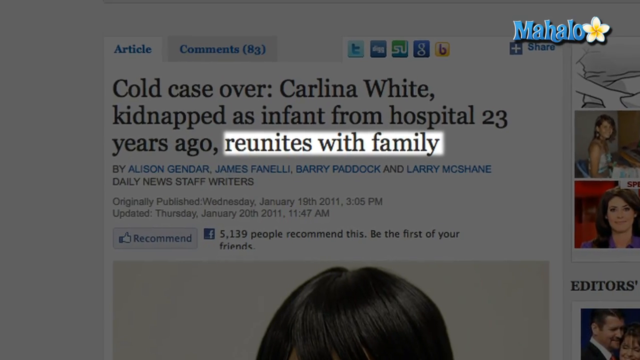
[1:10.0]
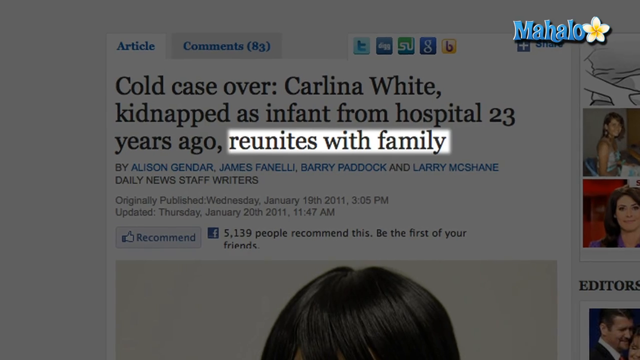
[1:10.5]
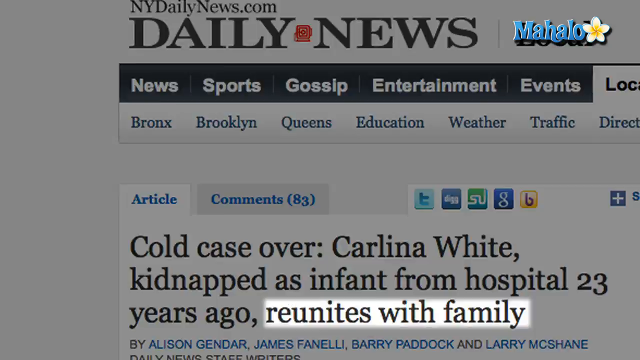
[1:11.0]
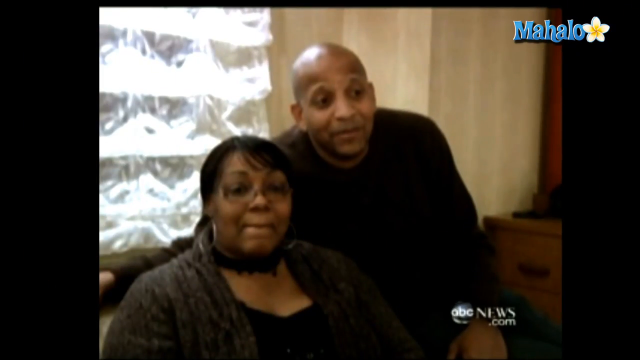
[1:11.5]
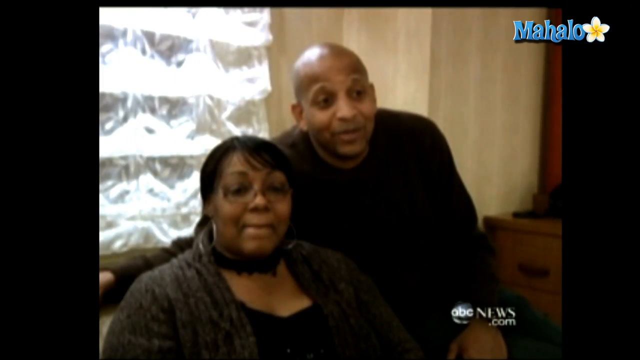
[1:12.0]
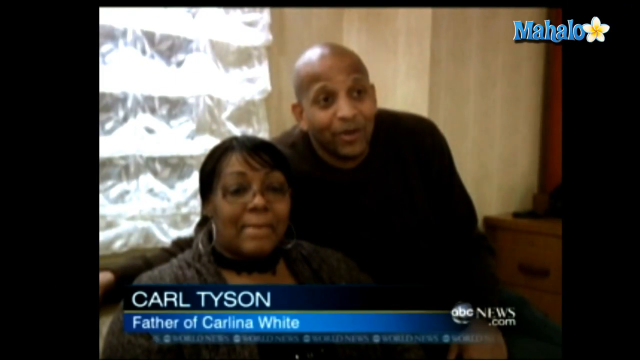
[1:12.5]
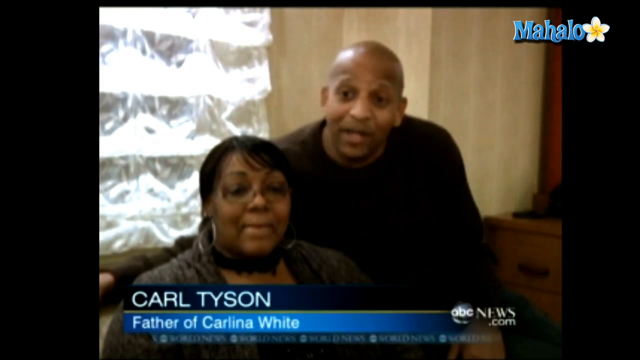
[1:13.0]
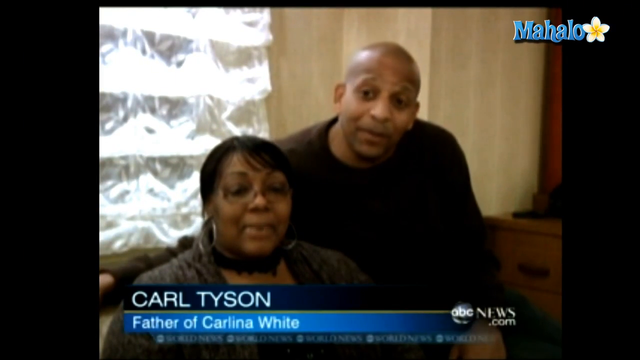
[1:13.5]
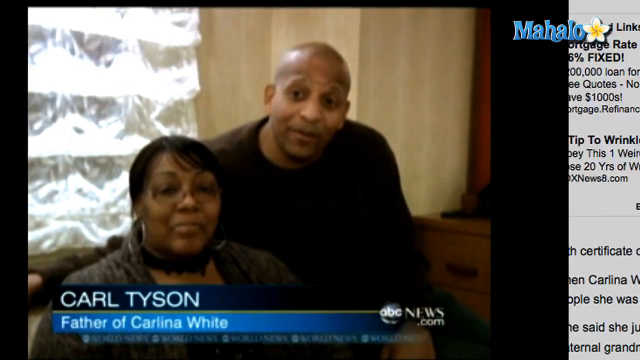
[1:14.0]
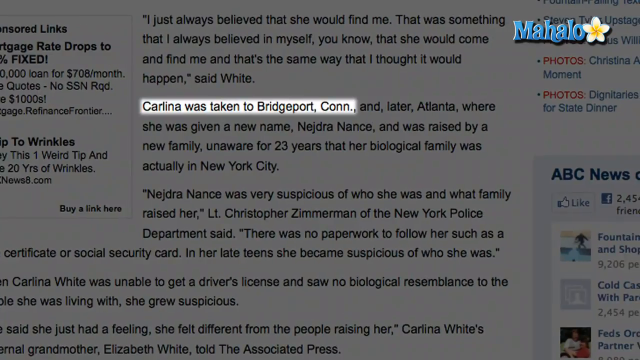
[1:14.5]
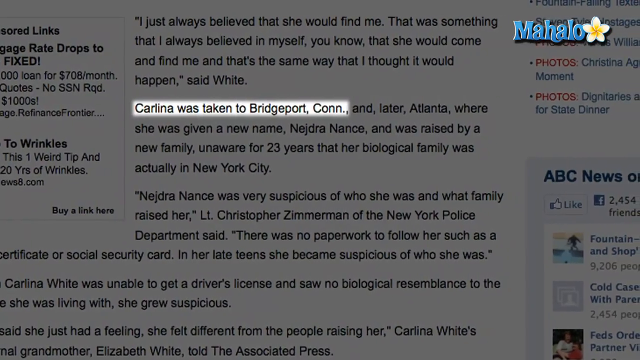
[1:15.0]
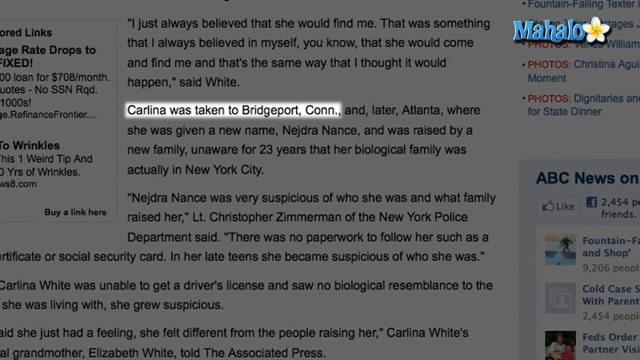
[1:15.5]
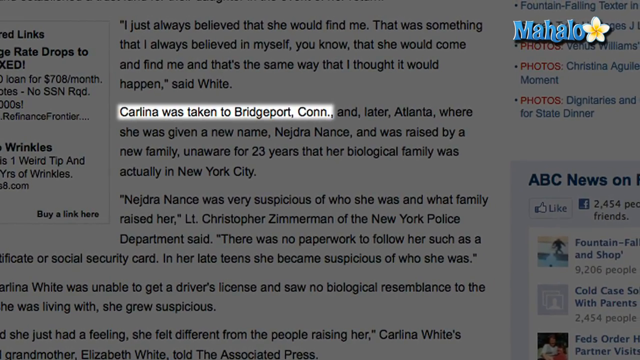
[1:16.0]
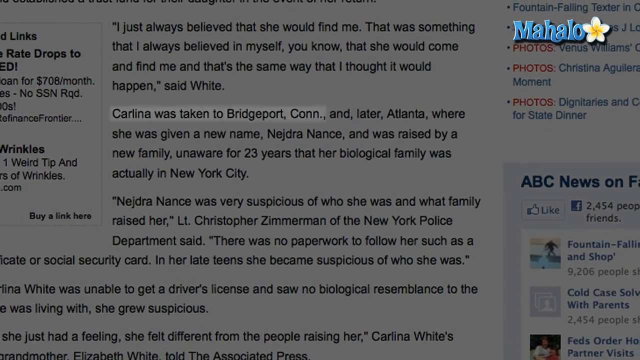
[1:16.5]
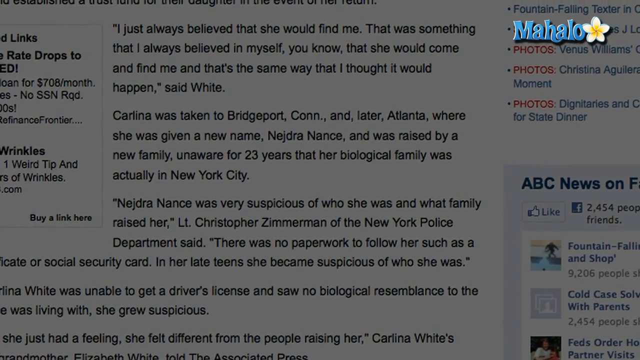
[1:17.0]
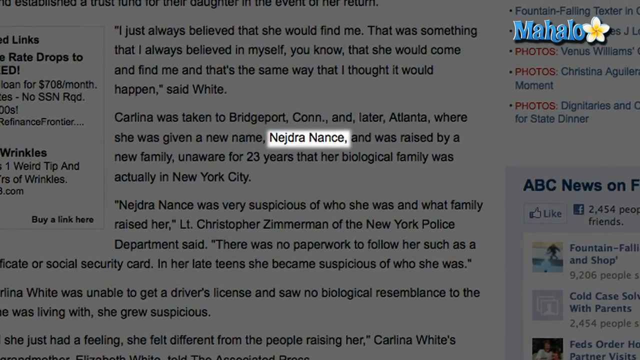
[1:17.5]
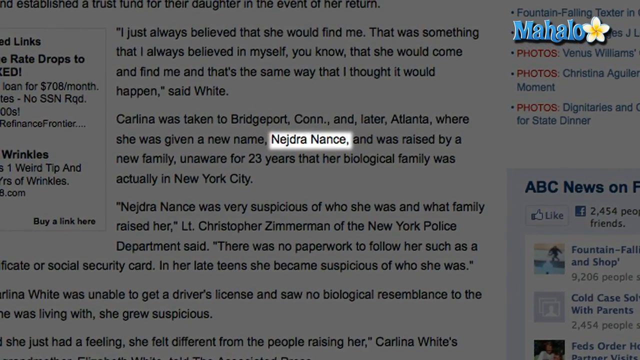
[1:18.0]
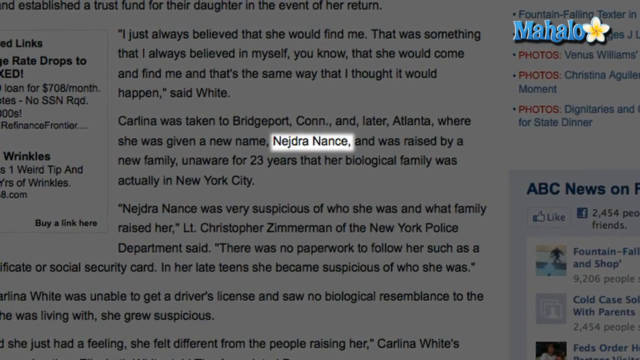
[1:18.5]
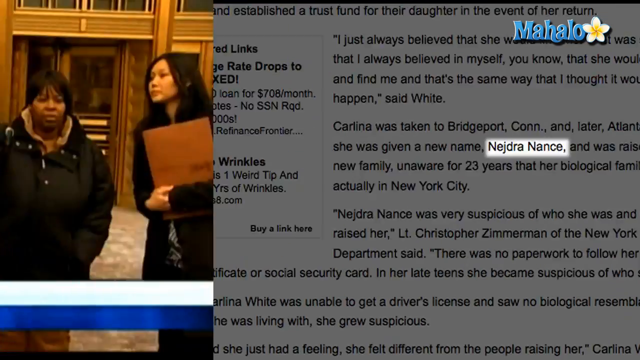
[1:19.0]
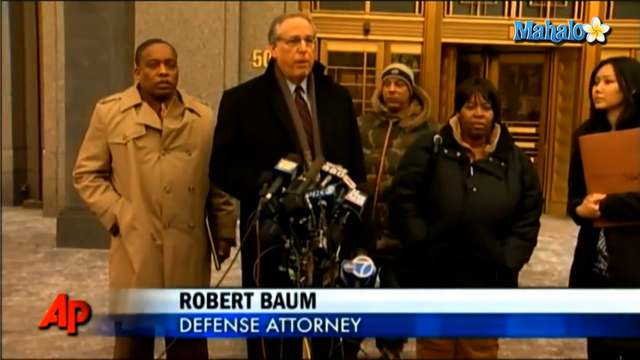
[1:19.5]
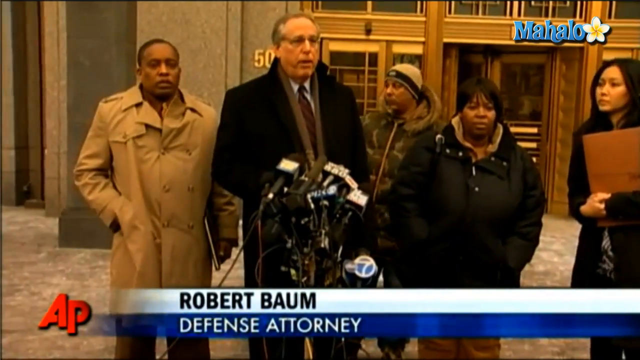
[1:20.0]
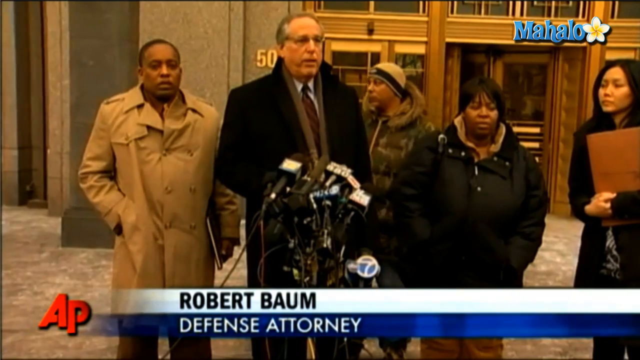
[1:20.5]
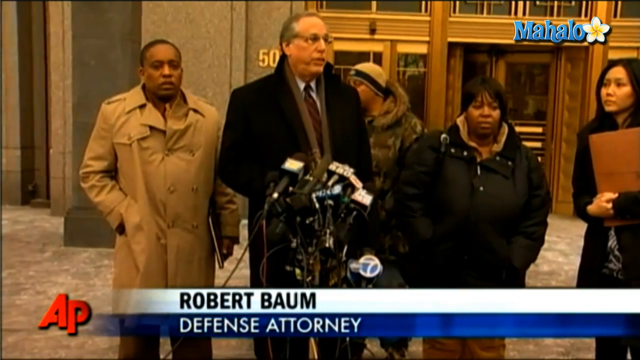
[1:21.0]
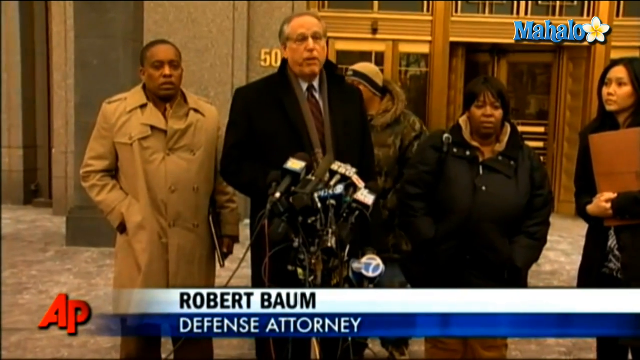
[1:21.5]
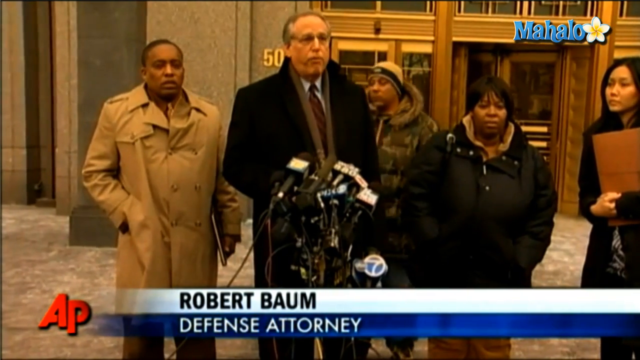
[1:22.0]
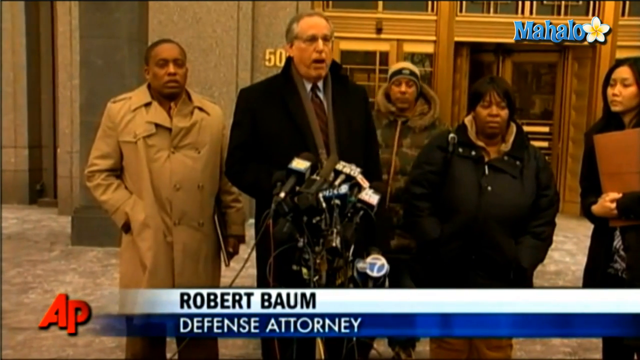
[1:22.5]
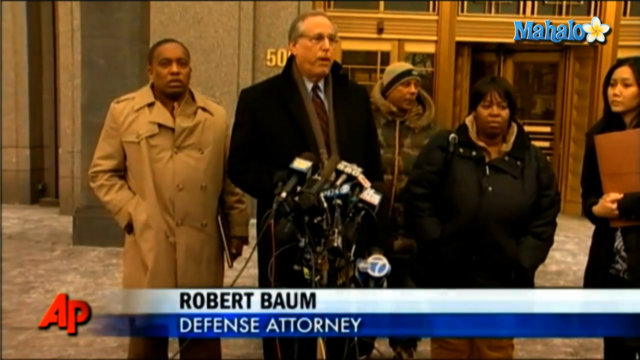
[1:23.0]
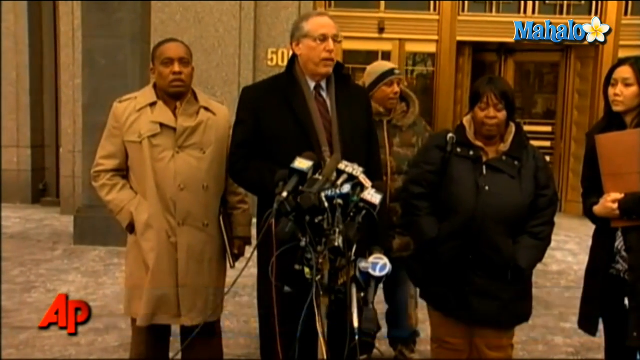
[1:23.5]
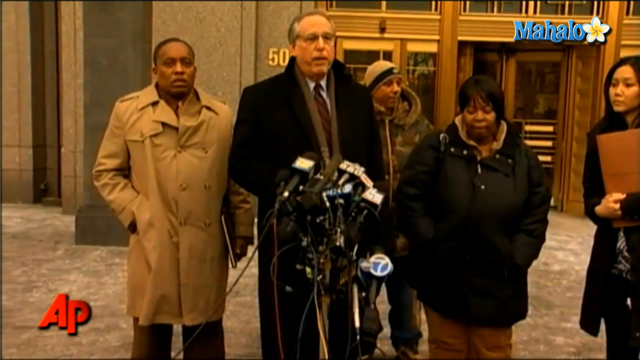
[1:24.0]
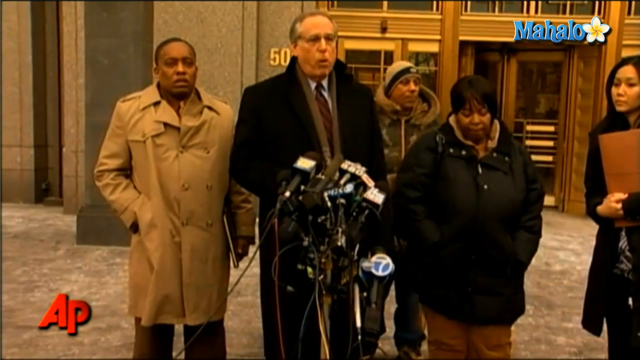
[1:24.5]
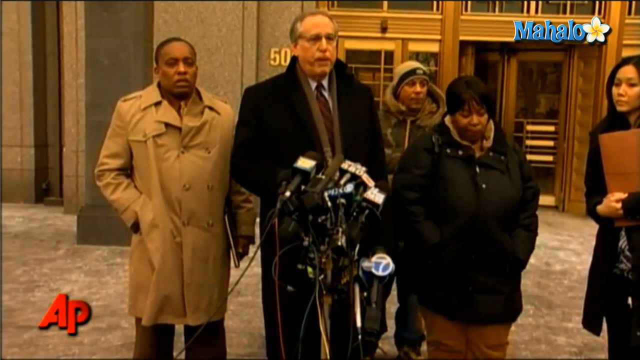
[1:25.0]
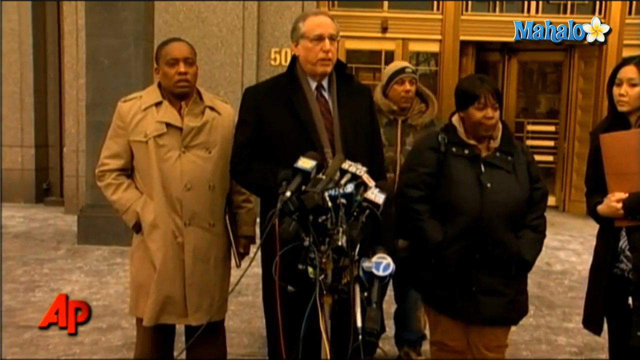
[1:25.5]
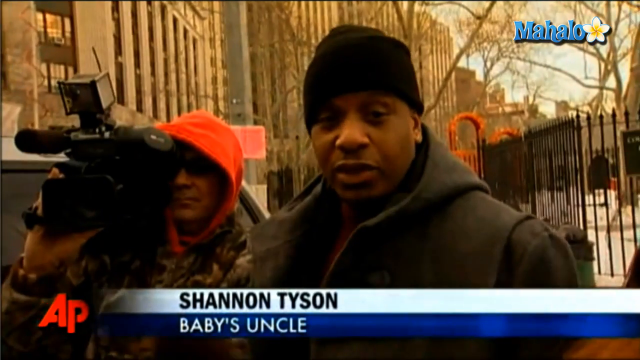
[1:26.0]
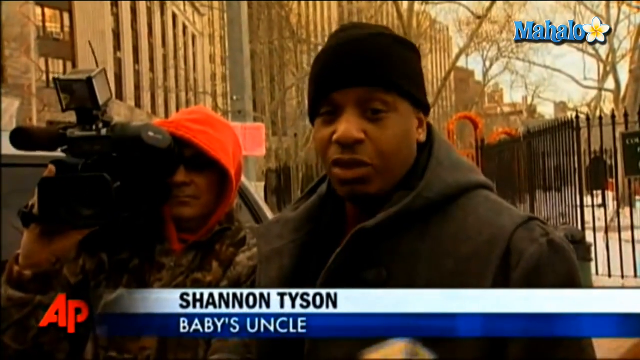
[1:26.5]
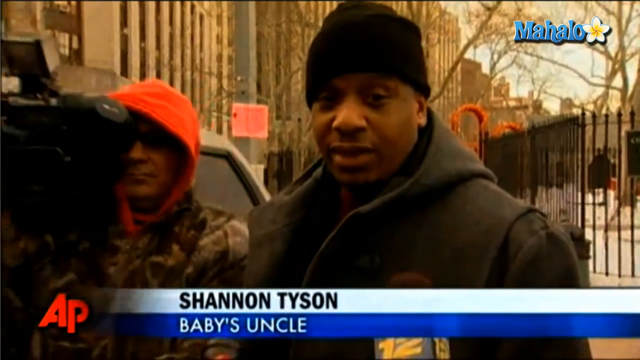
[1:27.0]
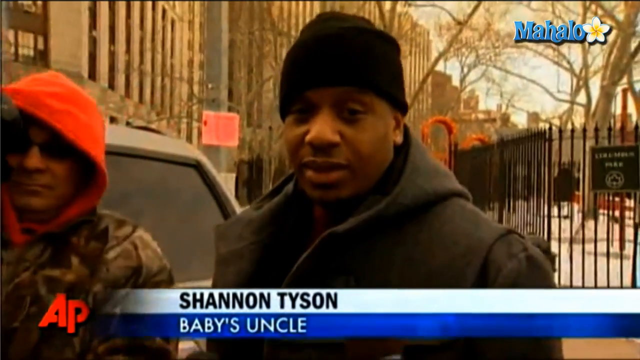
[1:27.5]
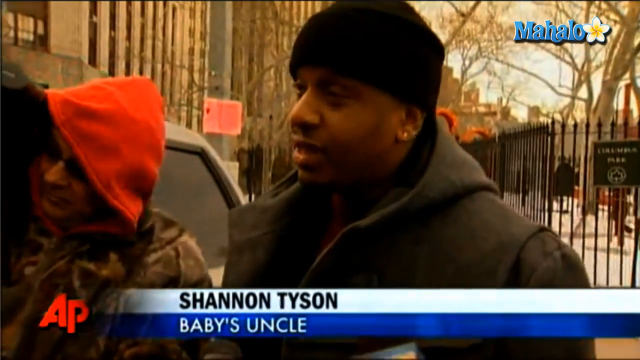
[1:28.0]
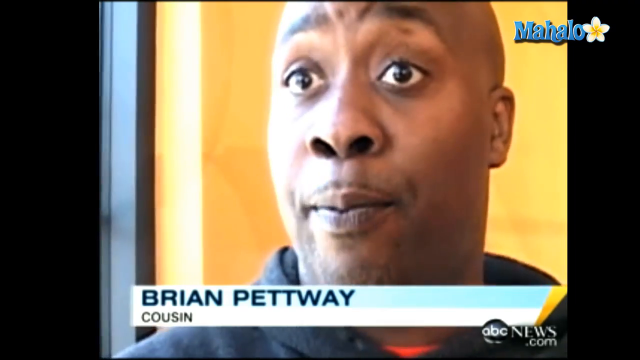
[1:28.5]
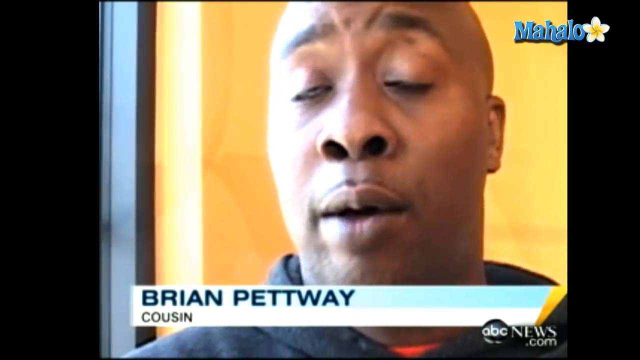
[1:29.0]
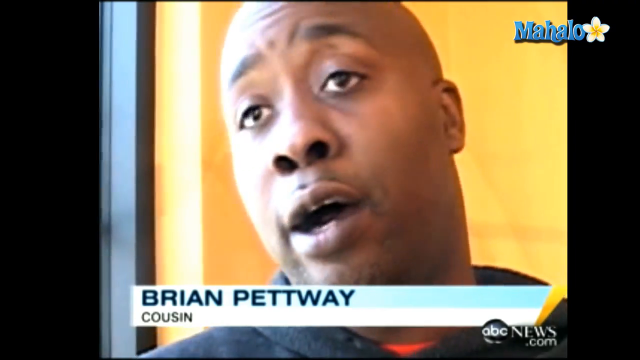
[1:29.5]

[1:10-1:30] A screenshot of a news article on a website is titled "Cold Case Over. Carlina White, kidnapped as infant from hospital 23 years ago, reunites with family", with the words "reunites with family" highlighted. The scene shifts to a woman and a man sitting inside a room, with text below reading "Carl Tyson, father of Carlina White". Another article screenshot follows, with highlighted text reading "Carlina was taken to Bridgeport, Connecticut". The scene then shifts again to the group of people standing outside a building, where the man is talking to a group of microphones; the text below reads "Robert Baum, defense attorney". Other people stand beside and behind him: an African American man is on his left, another African American man and a woman are on his right, and a second woman is also on his right. The scene then shifts to an interview with a man talking on what looks like a sidewalk, with text at the bottom reading "Shannon Tyson, baby's uncle".